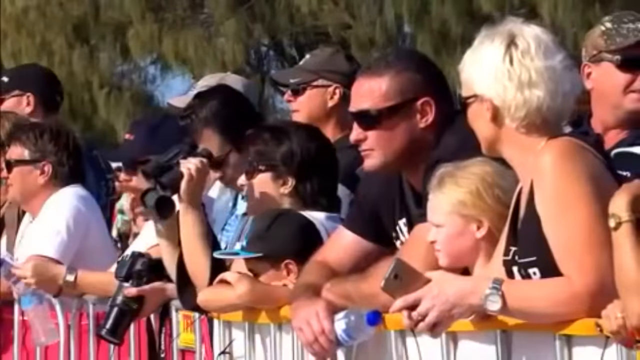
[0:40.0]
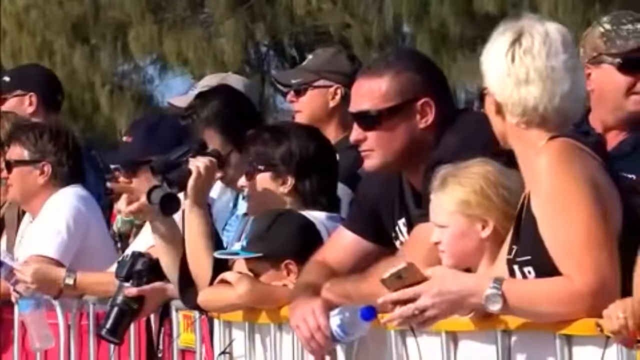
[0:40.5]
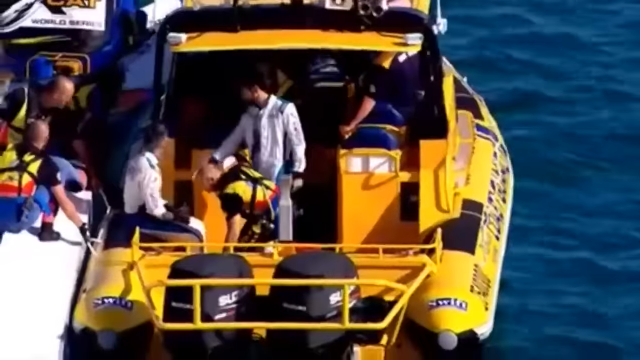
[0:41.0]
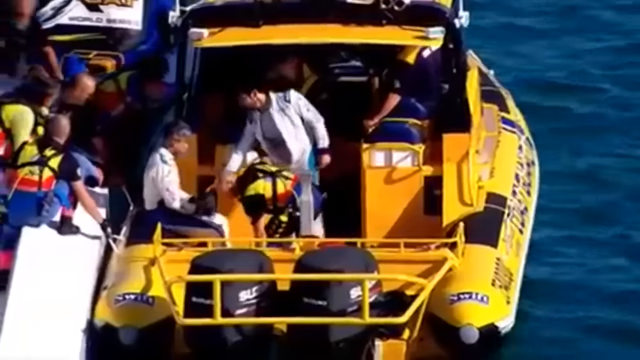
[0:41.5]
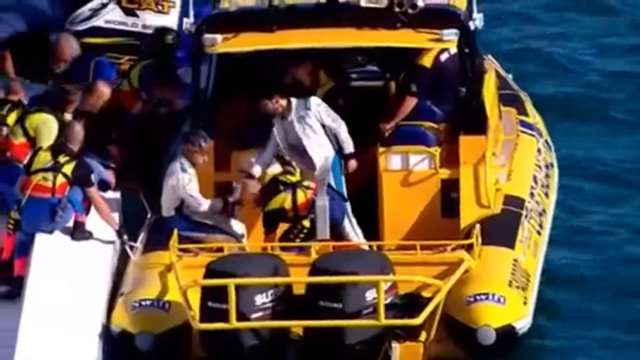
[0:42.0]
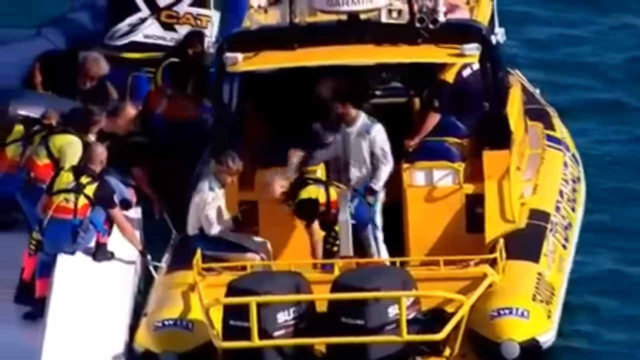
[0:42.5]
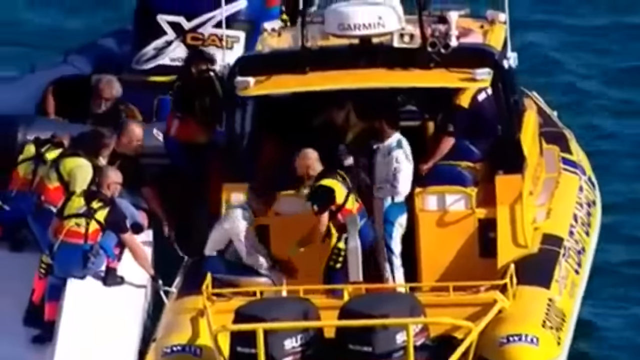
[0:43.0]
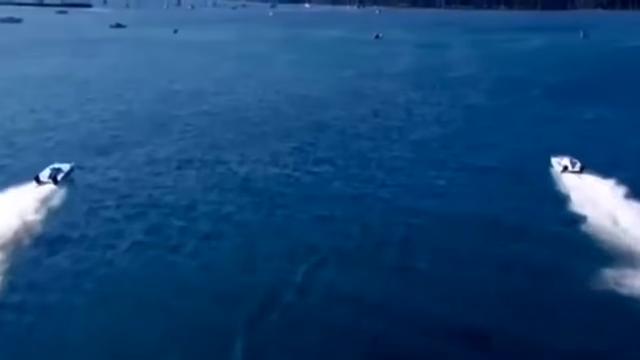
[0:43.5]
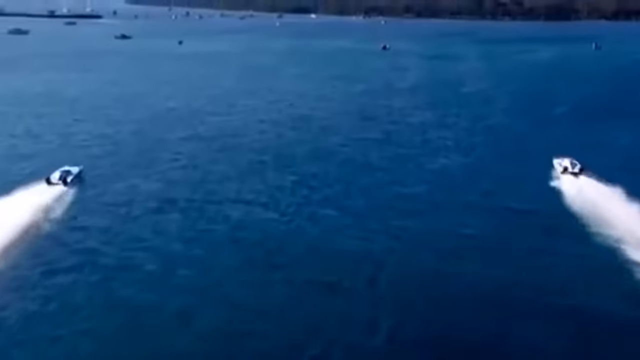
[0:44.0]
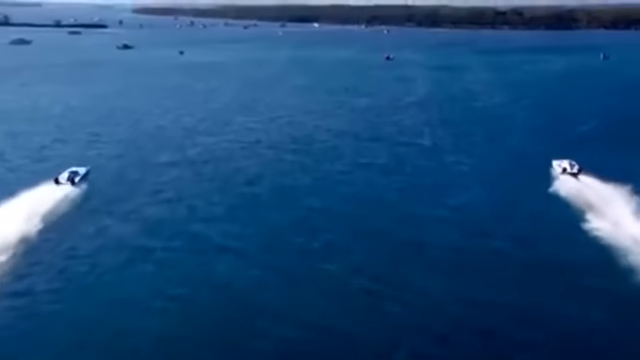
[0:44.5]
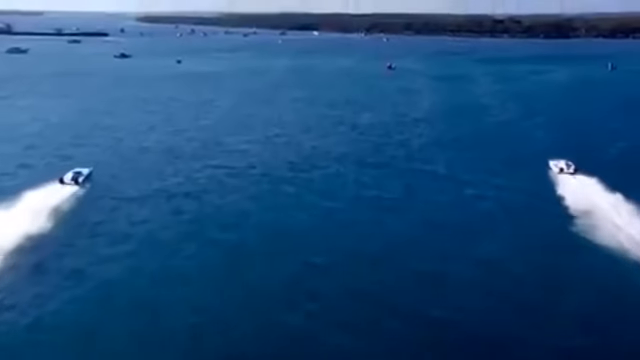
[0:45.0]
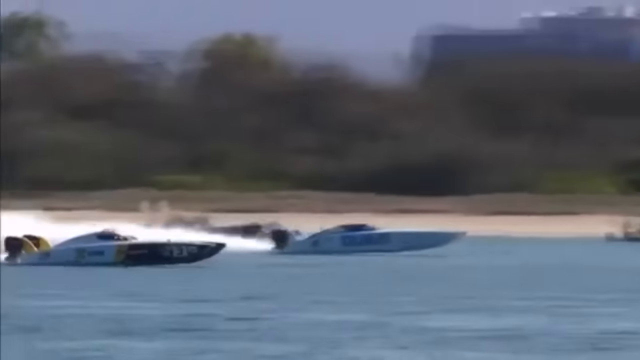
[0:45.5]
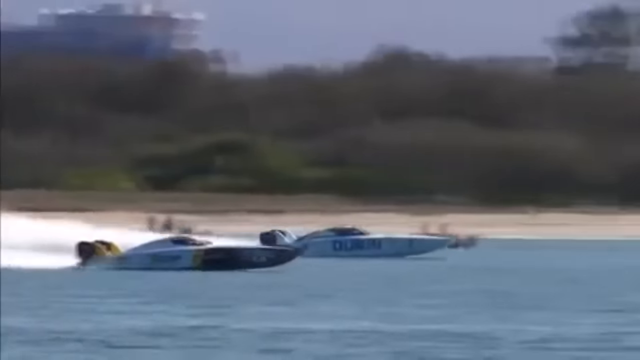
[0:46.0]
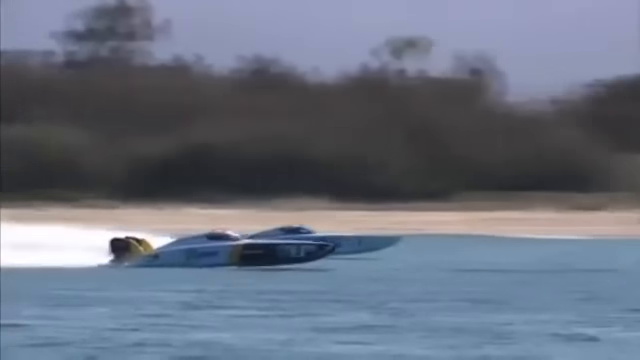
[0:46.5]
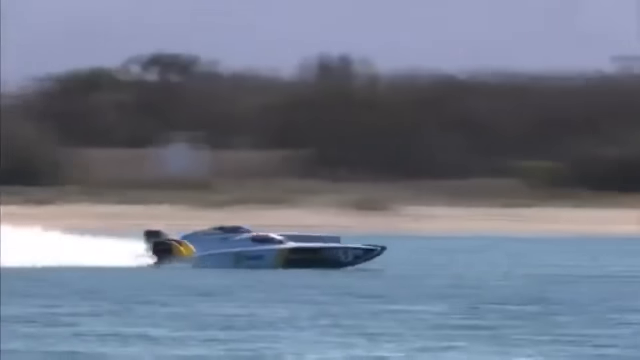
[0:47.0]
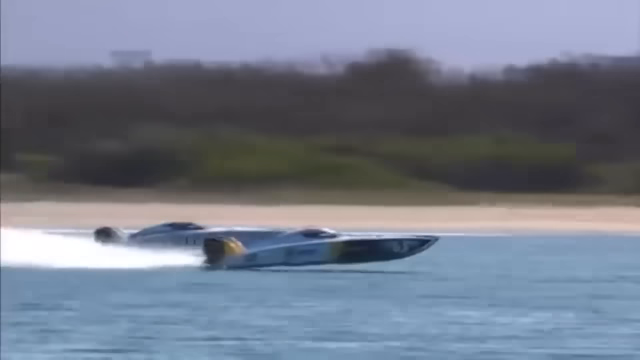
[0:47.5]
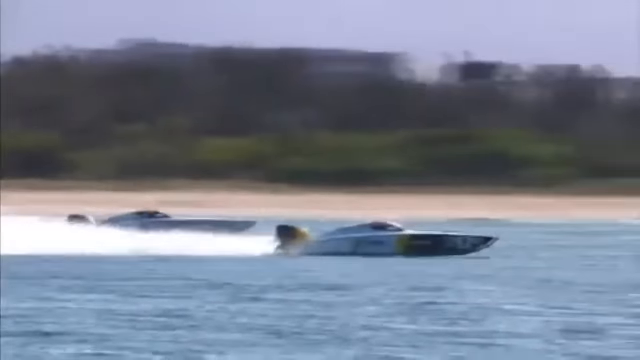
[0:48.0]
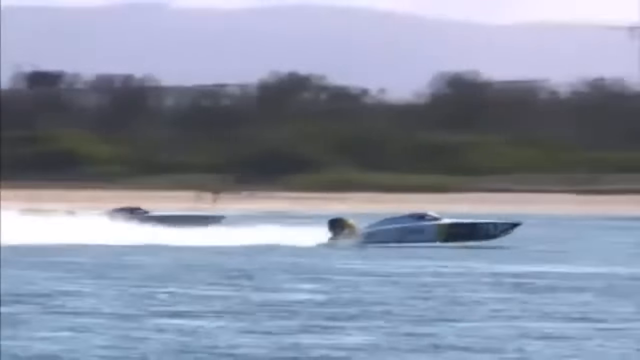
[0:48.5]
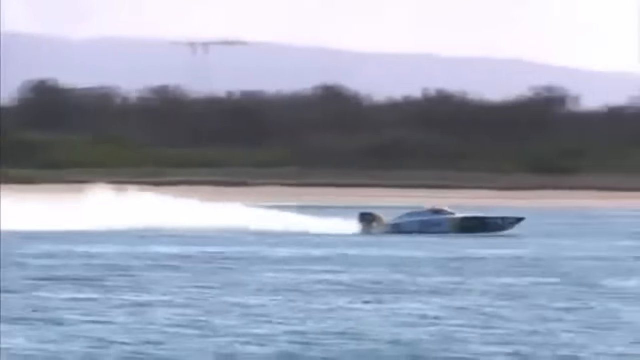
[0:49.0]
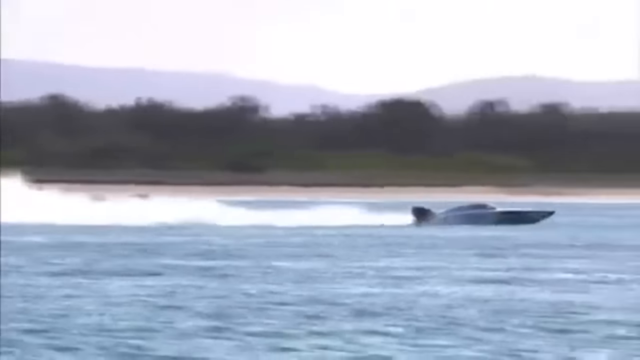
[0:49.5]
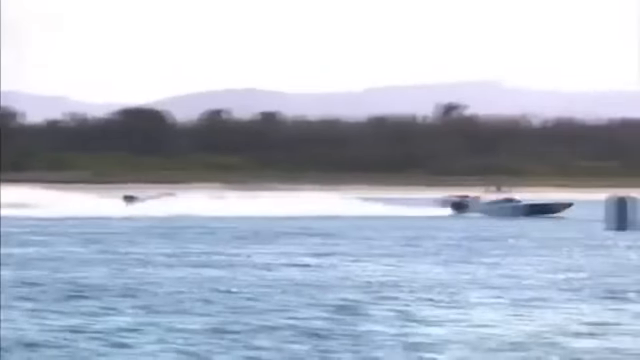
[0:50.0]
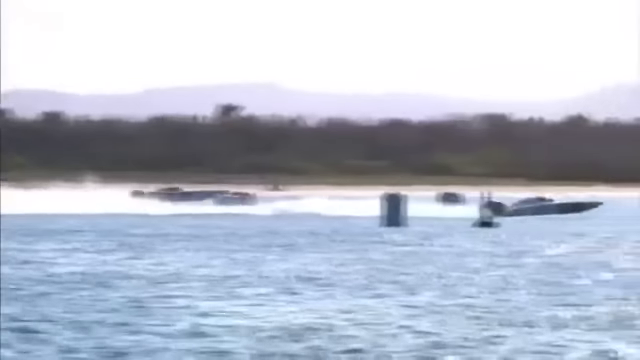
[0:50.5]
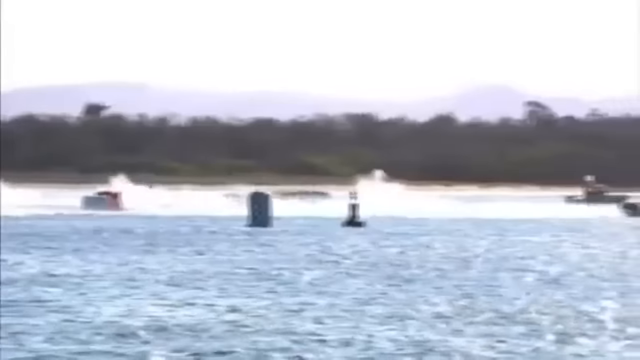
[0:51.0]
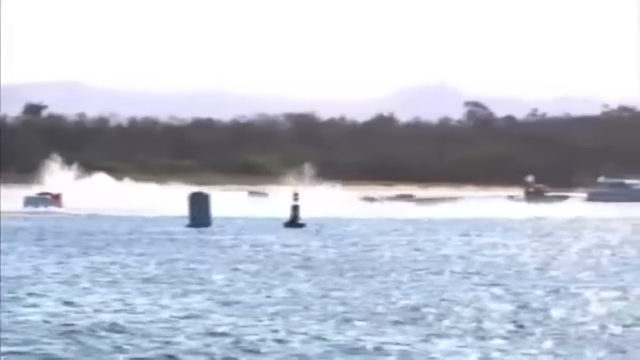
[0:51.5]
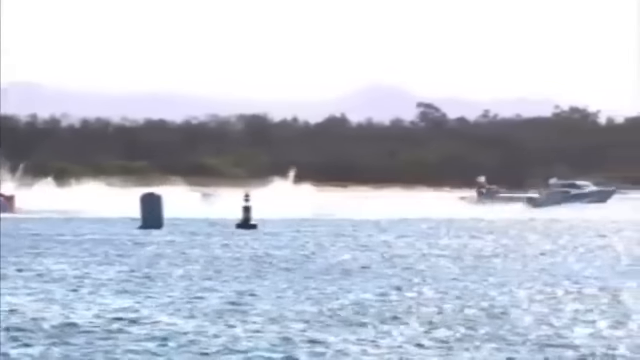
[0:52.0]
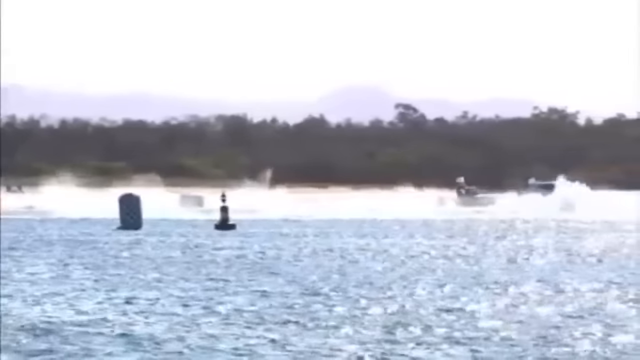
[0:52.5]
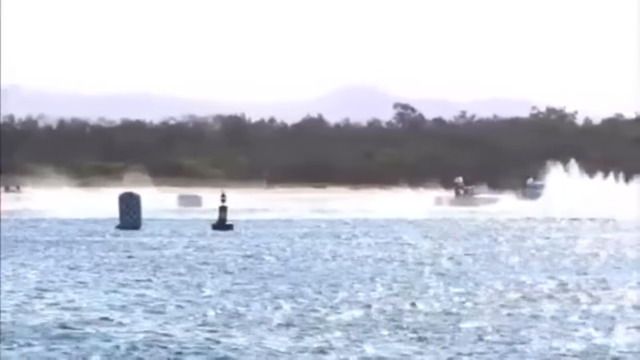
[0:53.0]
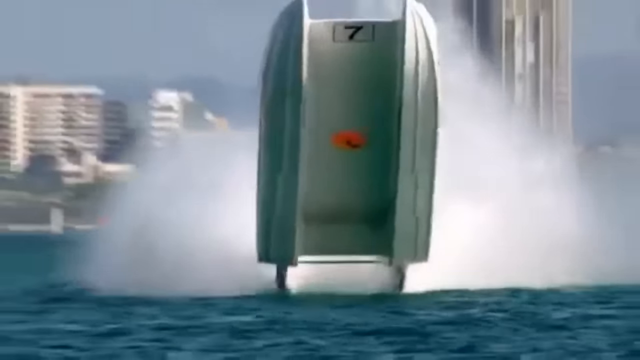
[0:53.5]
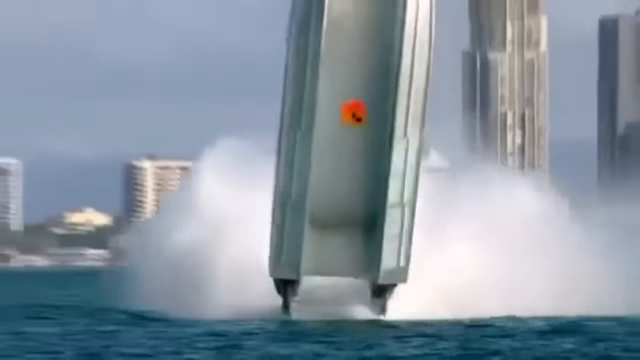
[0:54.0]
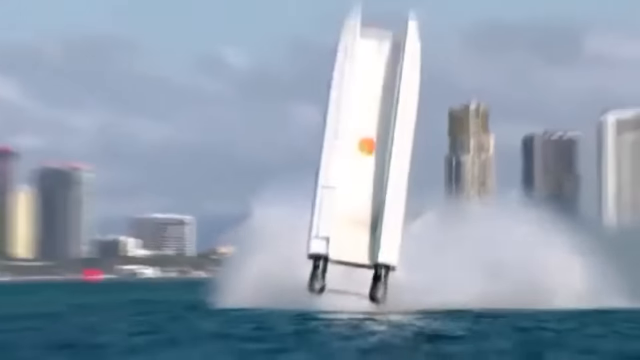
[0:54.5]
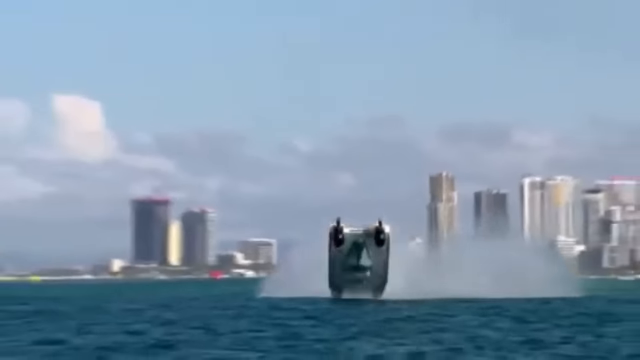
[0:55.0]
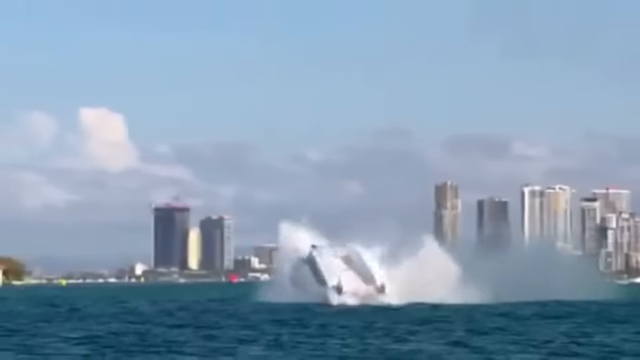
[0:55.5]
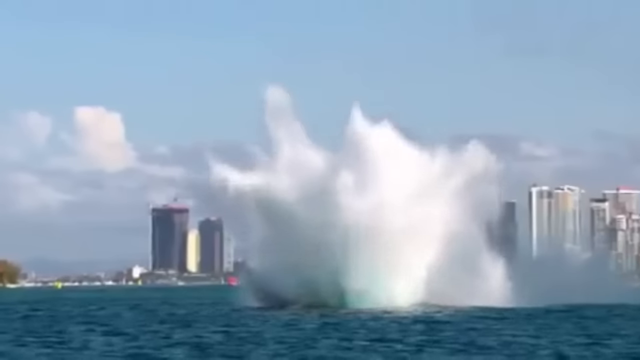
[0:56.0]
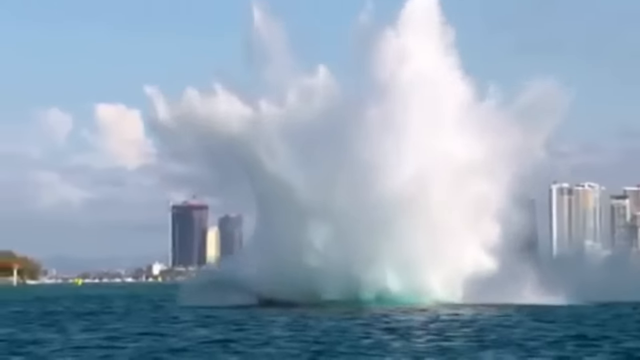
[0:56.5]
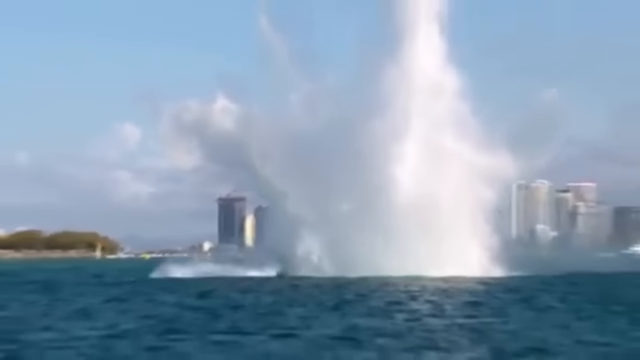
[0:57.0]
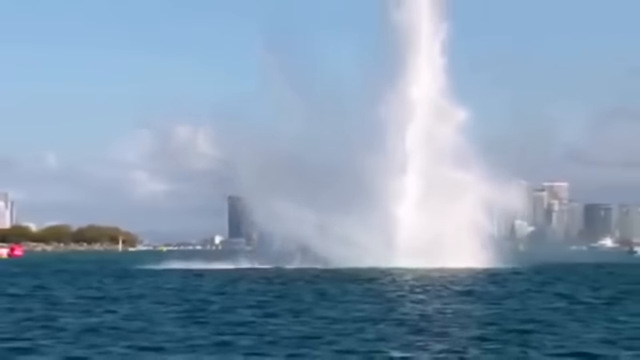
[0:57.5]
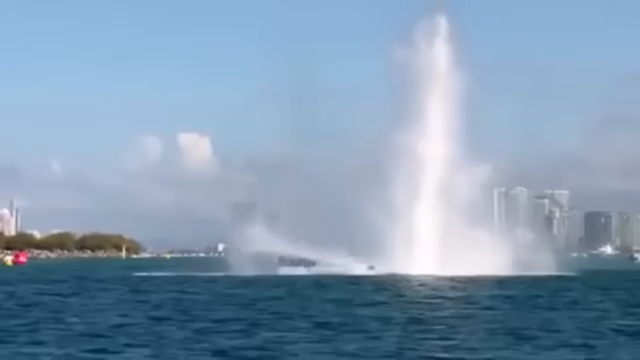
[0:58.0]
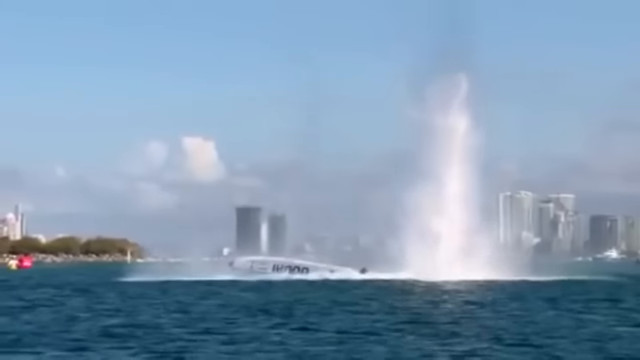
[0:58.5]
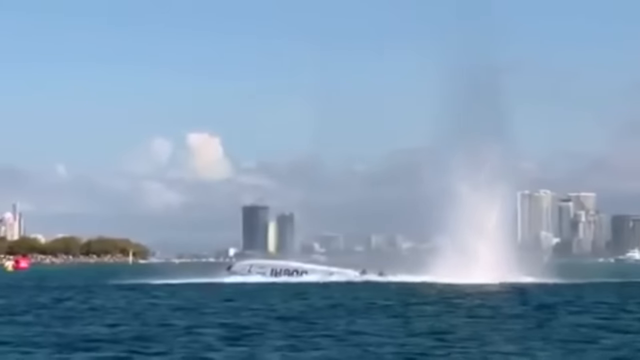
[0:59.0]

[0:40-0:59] The fans in attendance are briefly shown reacting before a helicopter view goes out over the water, showing the rescue boat and the driver of the upturned boat sitting and being looked after by medical personnel. The camera then switches to another replay of the events leading up to this. Both boats appear to be racing well, traveling quickly. From a front-on angle, the boat in question hits a wave that launches it. This view shows a number seven on the boat's underside, above the orange circle, toward the nose. The front-on angle conveys the speed of the boat, the height it reaches as it comes out of the water, and the force with which it slams into the surface, almost as if the water were concrete.